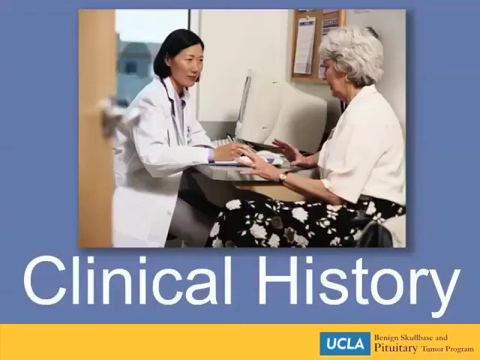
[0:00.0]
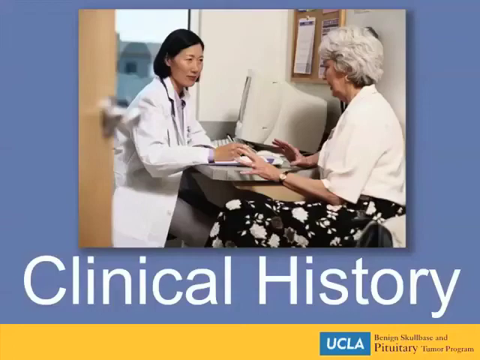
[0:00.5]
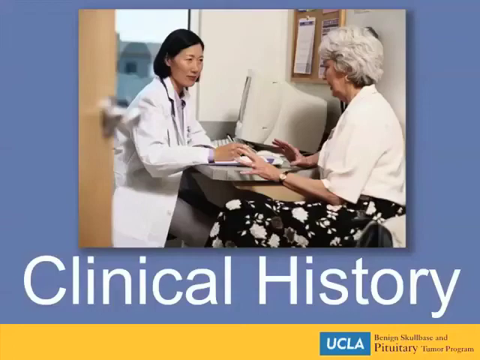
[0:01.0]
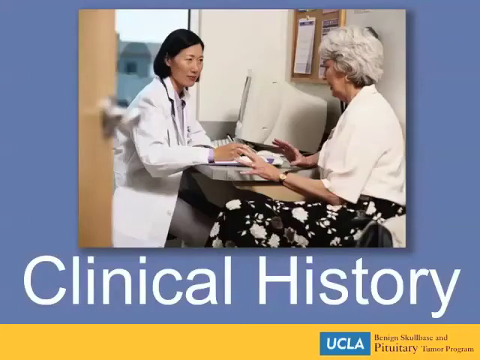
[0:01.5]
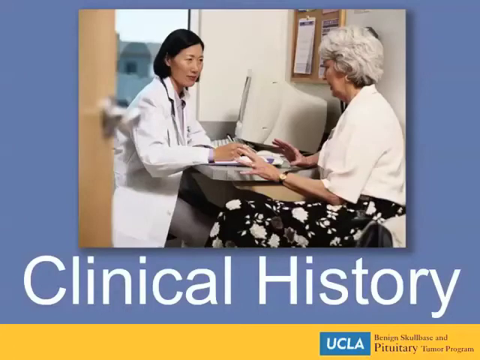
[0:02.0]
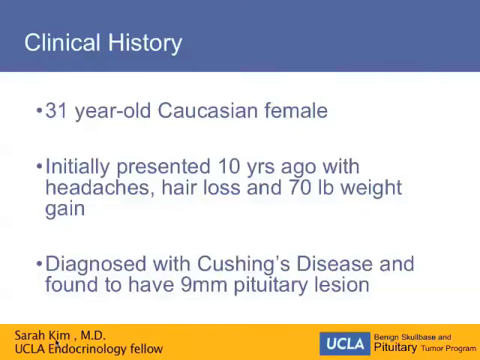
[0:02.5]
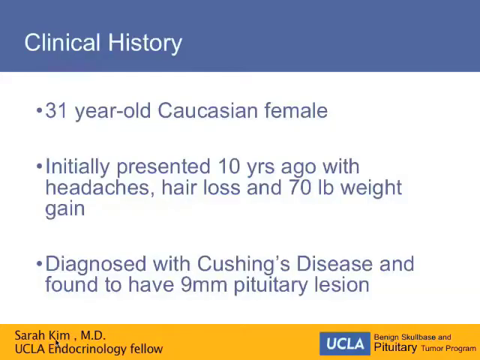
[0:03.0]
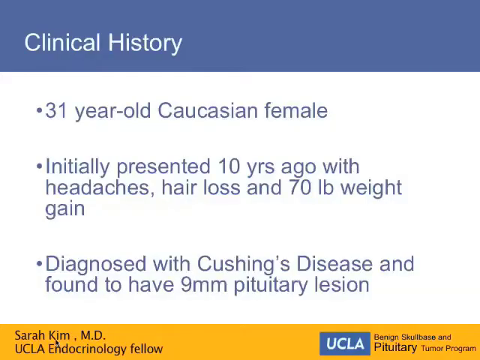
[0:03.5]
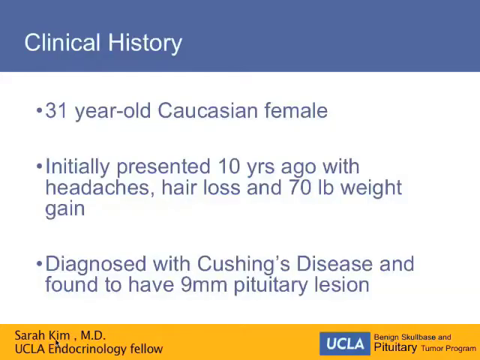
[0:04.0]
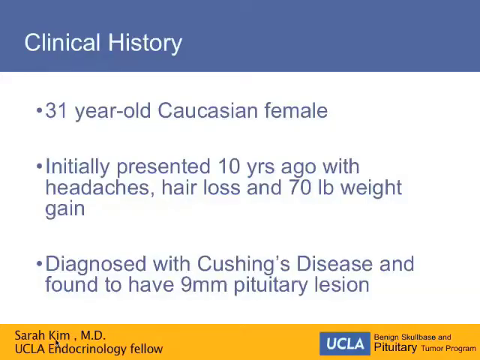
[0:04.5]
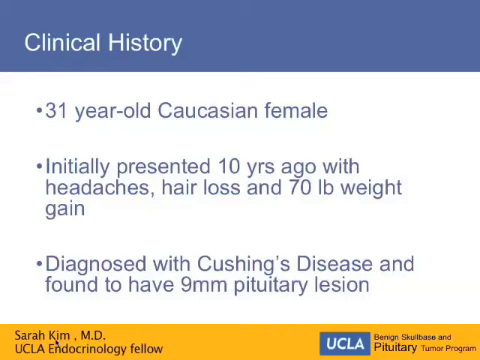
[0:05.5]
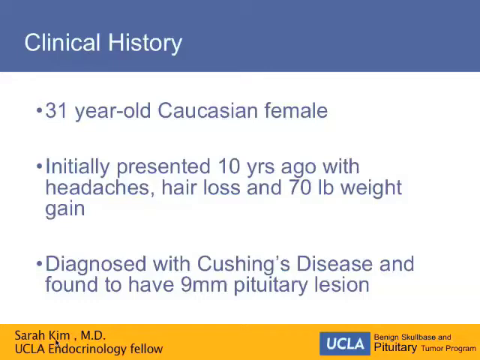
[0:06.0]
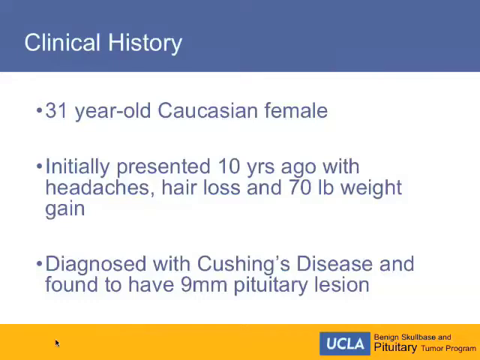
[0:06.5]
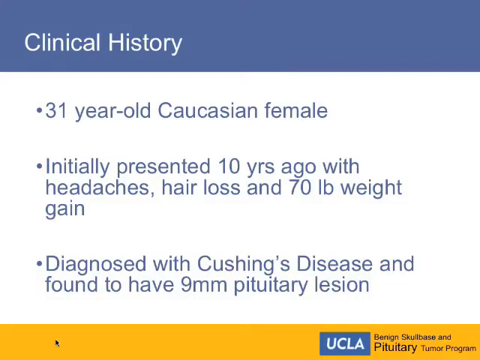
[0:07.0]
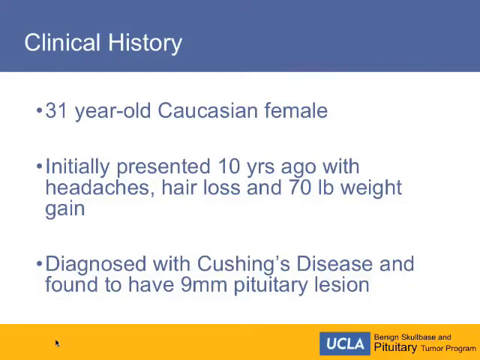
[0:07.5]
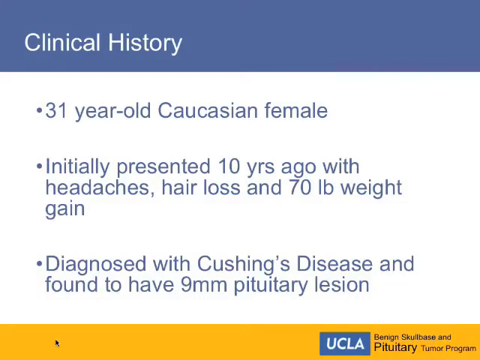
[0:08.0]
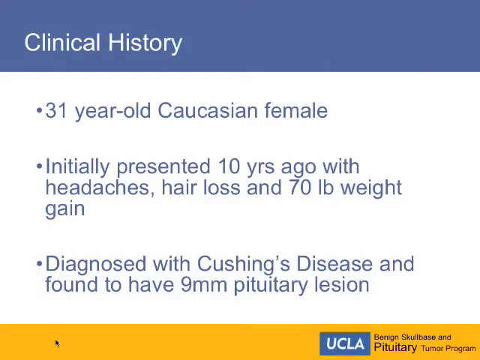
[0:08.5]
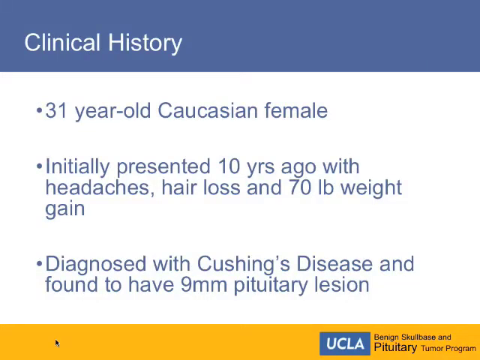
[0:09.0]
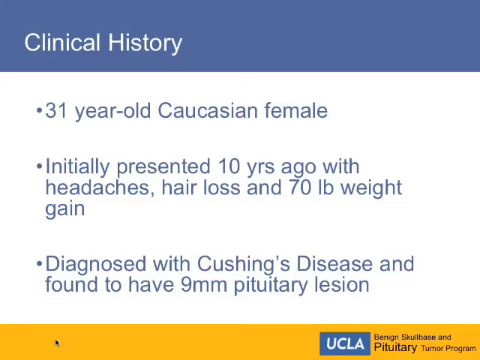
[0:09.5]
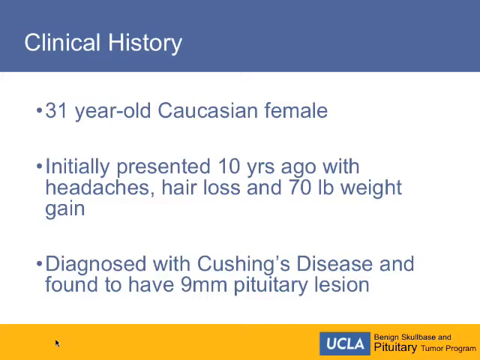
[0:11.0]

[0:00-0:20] An intro screen reads "clinical history" and shows a picture of two people. On the left appears to be a nurse sitting in front of a computer, and on the right is an older lady who seems to be describing her symptoms. She has wavy, curly gray hair and wears some sort of black skirt with white flowers on it. The video then moves to a PowerPoint-style screen with "clinical history" at the top and a few bullet points. The first describes a "31-year-old Caucasian female." The second says the patient "initially presented 10 years ago with headaches, hair loss, and 70-pound weight gain." The third says the patient was "diagnosed with Cushing's disease and found to have 9-MM pituitary lesion."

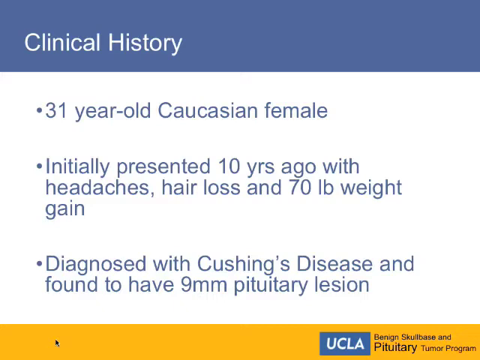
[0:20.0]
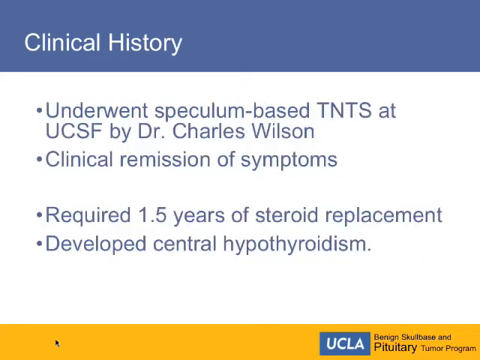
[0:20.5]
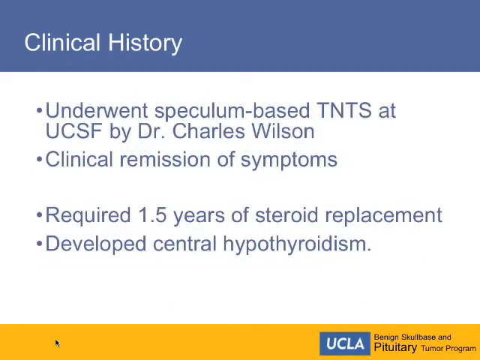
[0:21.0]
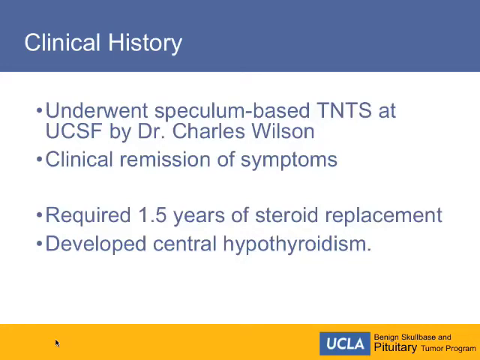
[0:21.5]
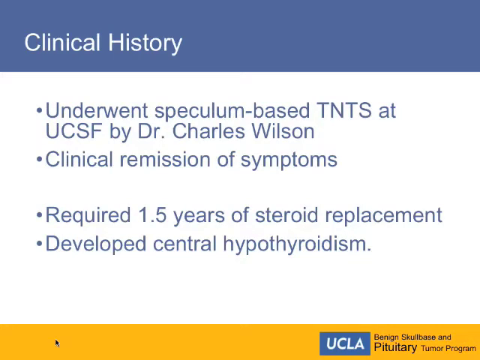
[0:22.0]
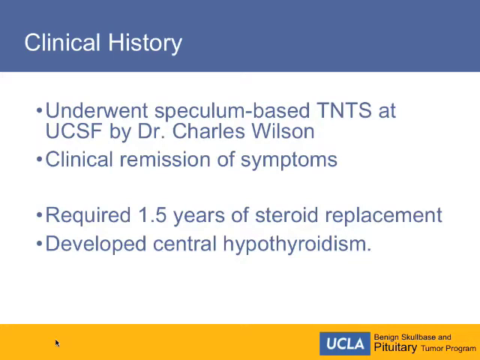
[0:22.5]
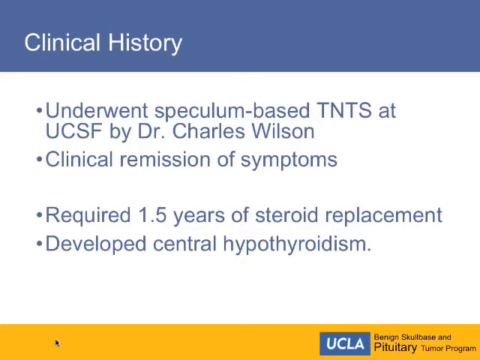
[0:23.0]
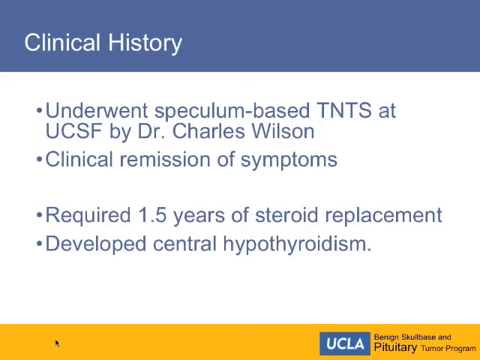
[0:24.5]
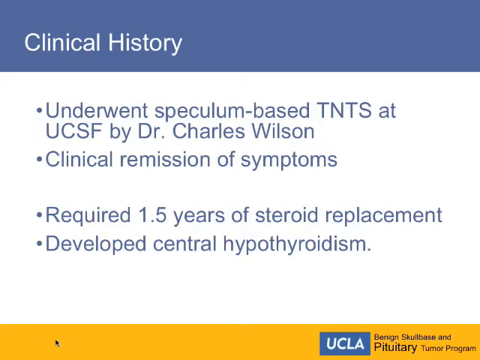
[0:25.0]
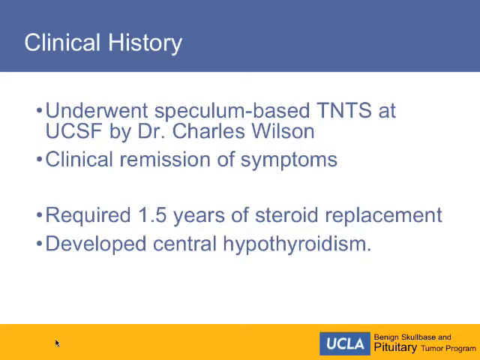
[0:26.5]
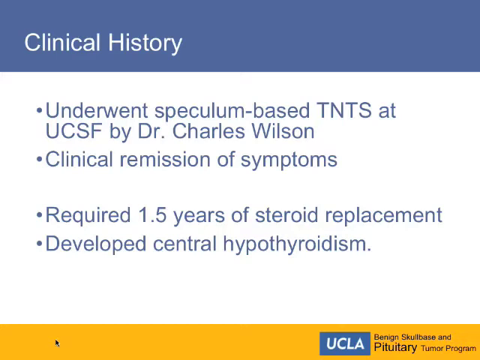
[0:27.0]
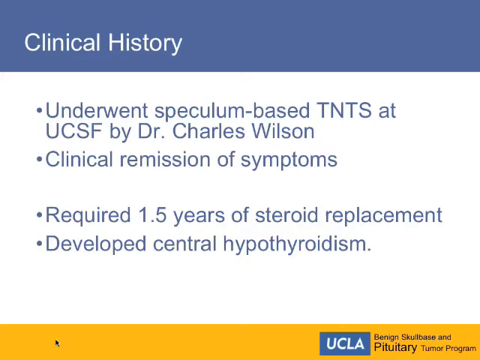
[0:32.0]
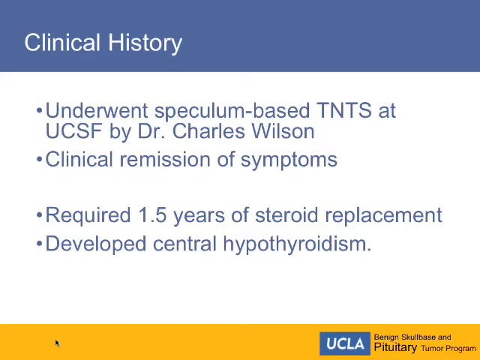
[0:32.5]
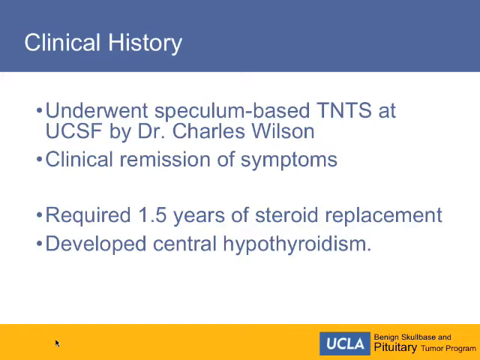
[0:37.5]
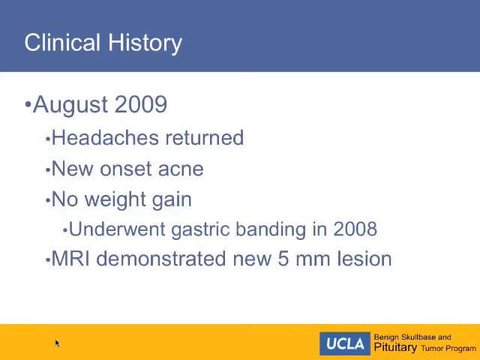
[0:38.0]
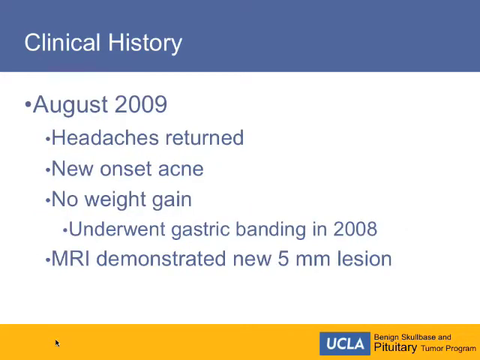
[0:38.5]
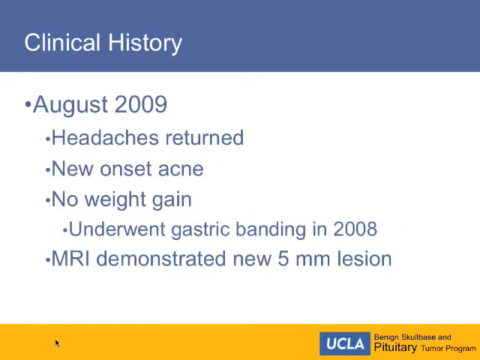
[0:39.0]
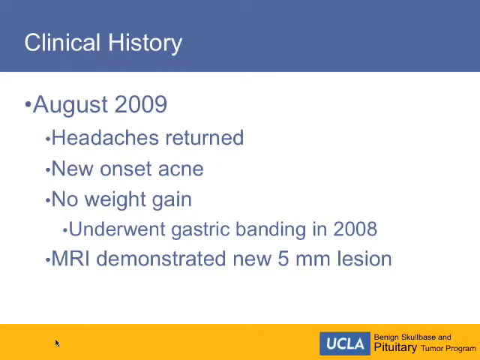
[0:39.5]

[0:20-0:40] The same slide stays on screen for a second before switching to the next slide, which still has "clinical history" as its title but now has four bullet points instead of three. They read that the patient "underwent speculum-based TNTS at UCSF by Dr. Charles Watt Wilson," then "clinical remission of symptoms," then that the patient "required 1.5 years of steroid replacement," and finally that the patient "developed central hypothyroidism." In the last couple of seconds, the video switches to the next slide.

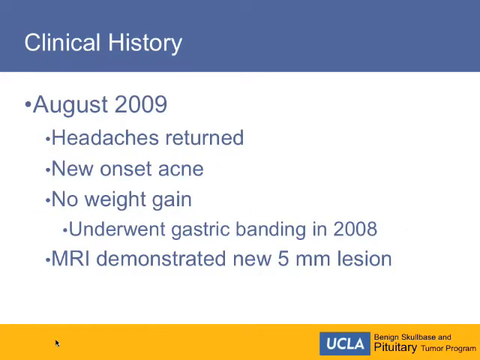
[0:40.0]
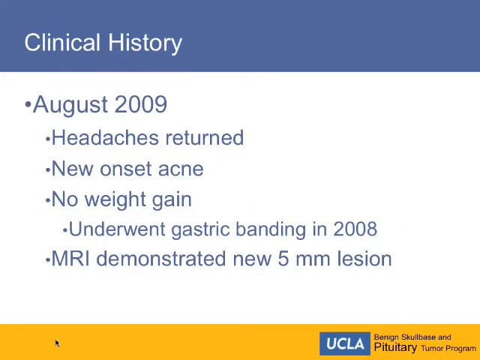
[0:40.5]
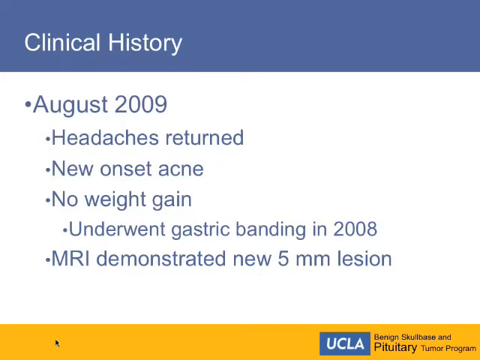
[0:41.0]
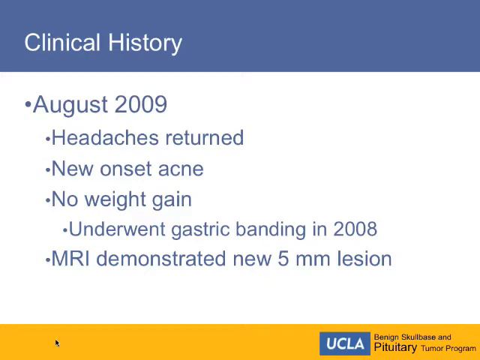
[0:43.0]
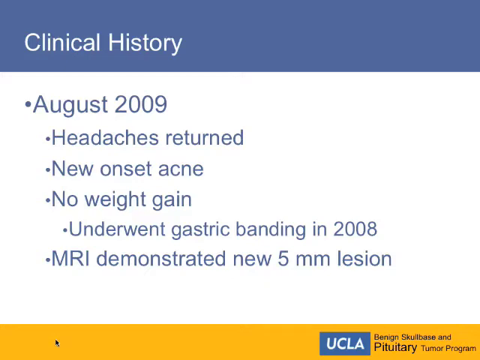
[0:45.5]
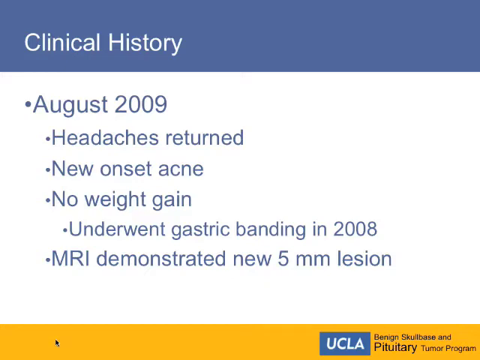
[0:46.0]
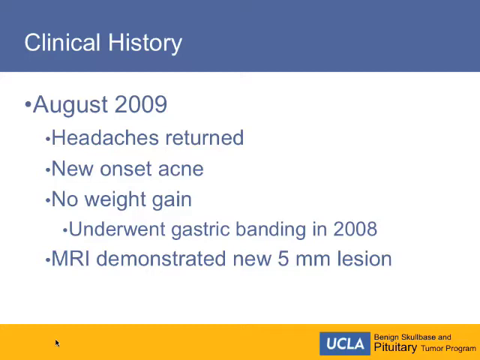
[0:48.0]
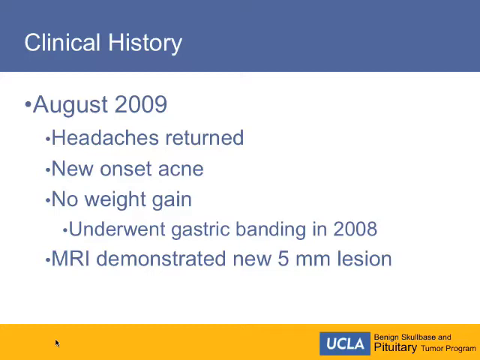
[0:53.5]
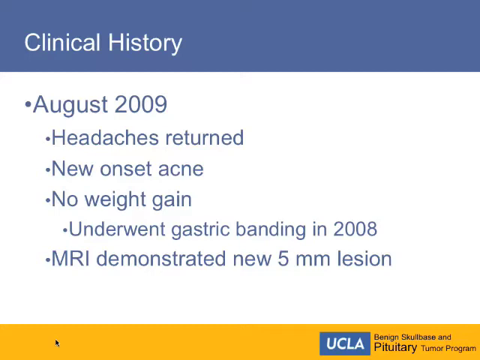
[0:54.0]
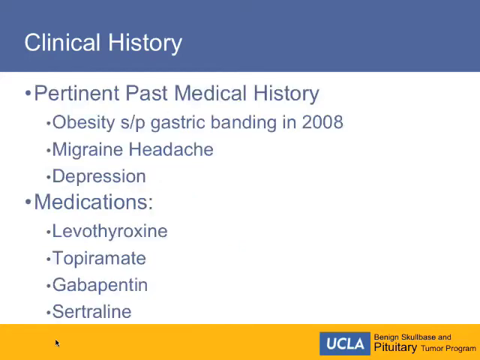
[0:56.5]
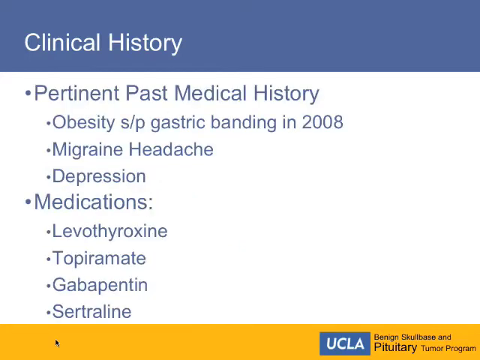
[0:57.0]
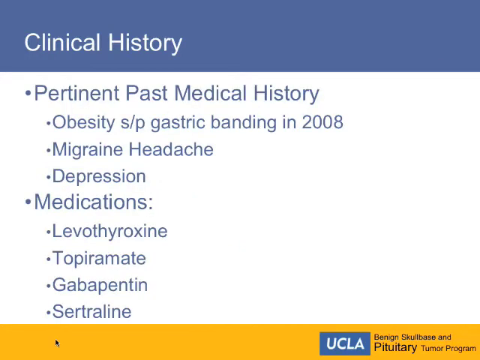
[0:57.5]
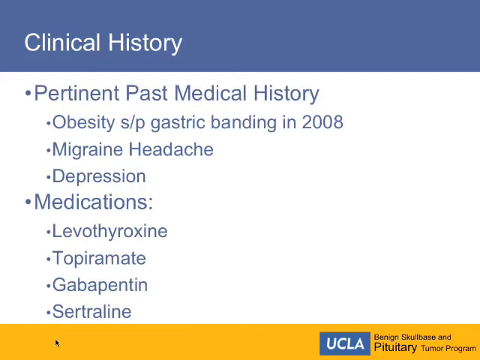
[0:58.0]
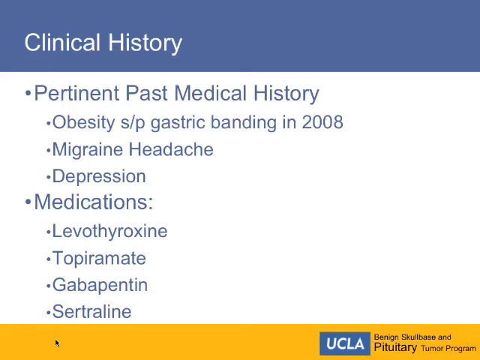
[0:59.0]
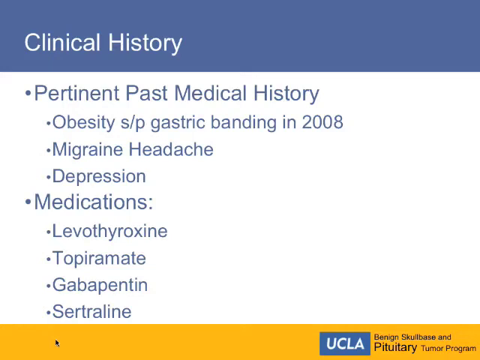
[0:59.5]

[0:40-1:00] The next slide still has "clinical history" at the top and six bullet points, with only the top one shown large. It reads "August 2009," and the points below it seem to fall under that date. Beneath it, the bullet points read "headaches returned," "new onset acne," "no weight gain," "underwent gastric banding in 2008," and "MRI demonstrated new 5mm lesion." In the last couple of seconds, the video switches to the next slide.